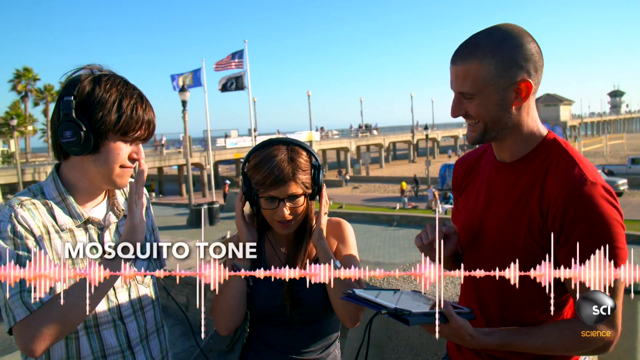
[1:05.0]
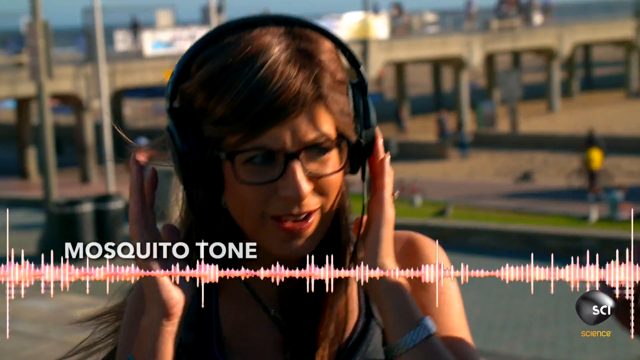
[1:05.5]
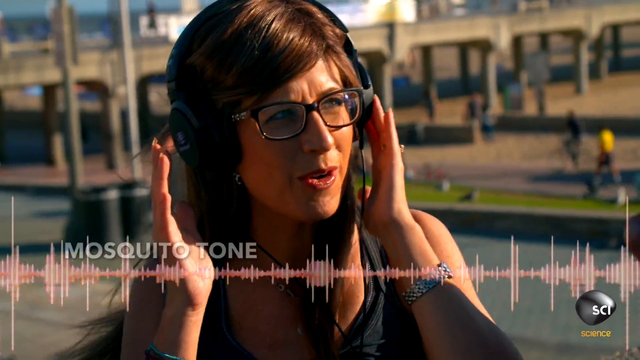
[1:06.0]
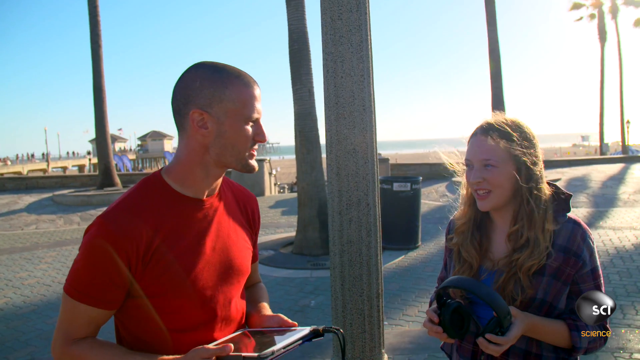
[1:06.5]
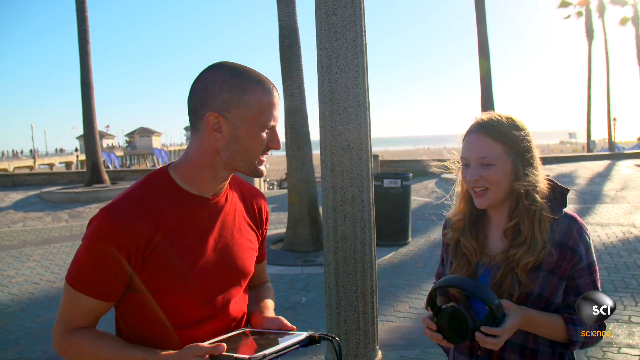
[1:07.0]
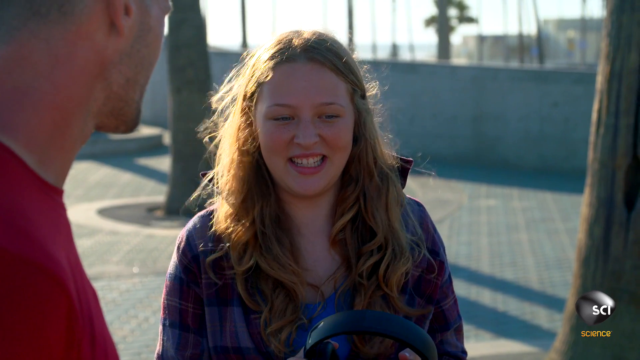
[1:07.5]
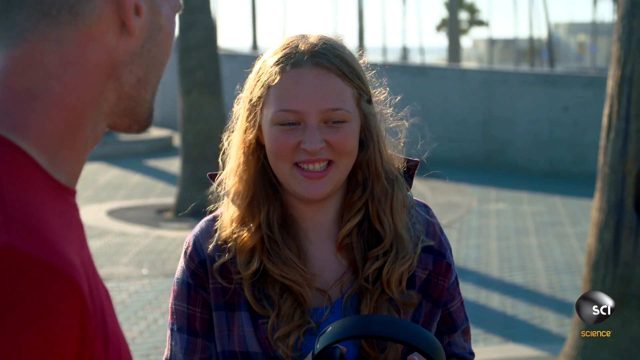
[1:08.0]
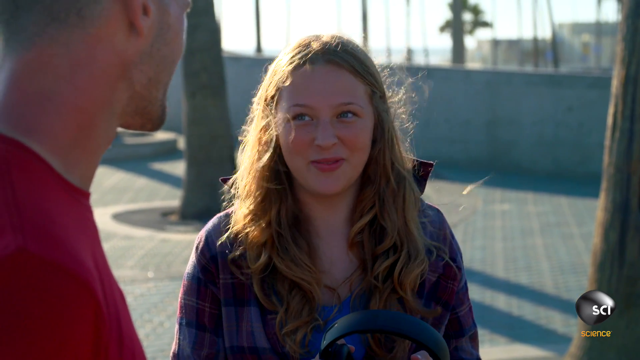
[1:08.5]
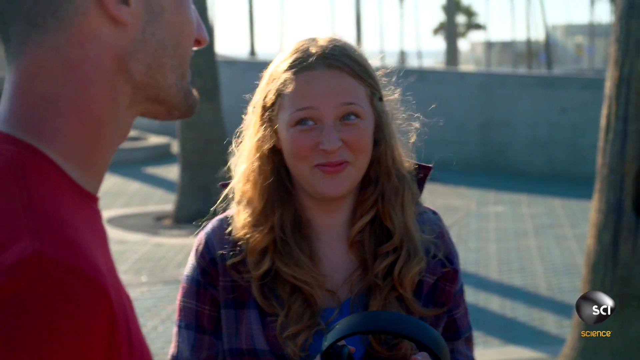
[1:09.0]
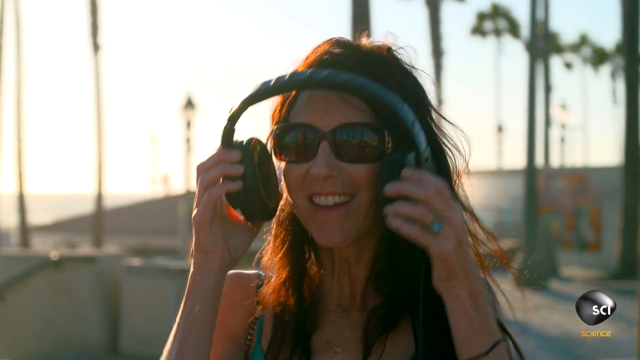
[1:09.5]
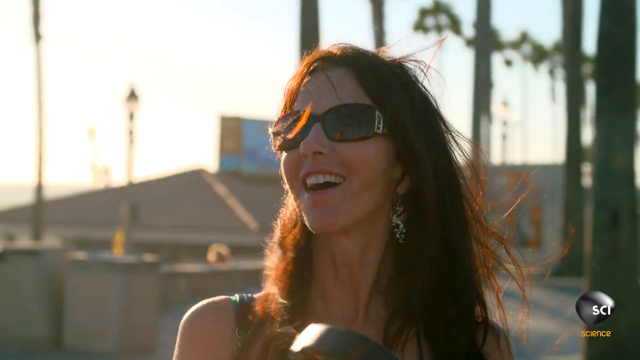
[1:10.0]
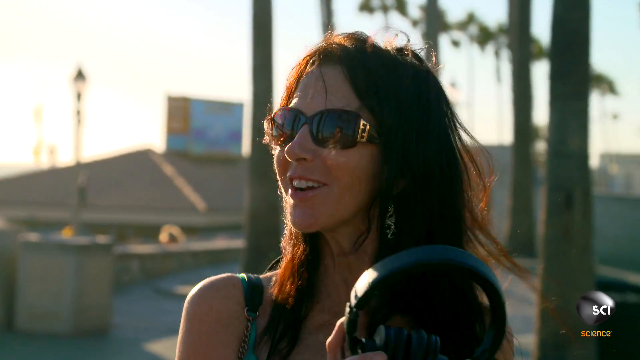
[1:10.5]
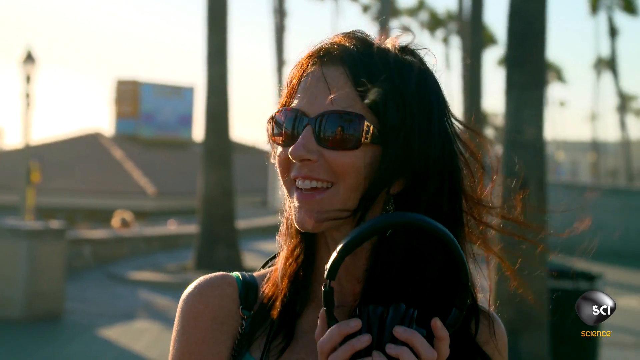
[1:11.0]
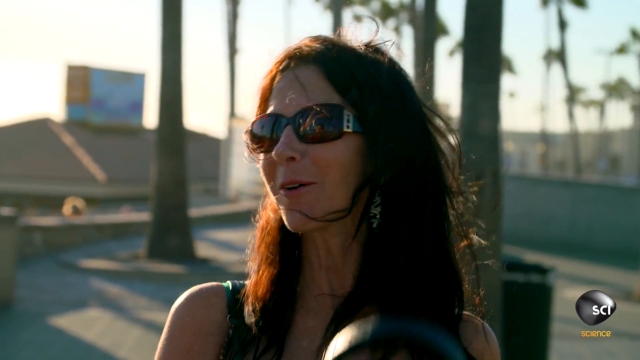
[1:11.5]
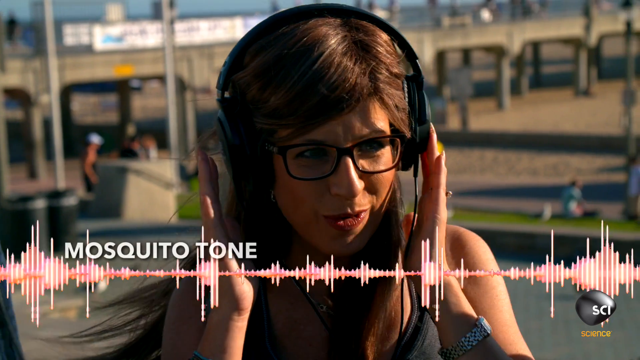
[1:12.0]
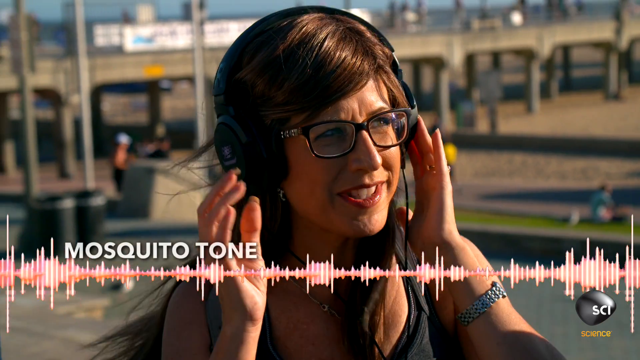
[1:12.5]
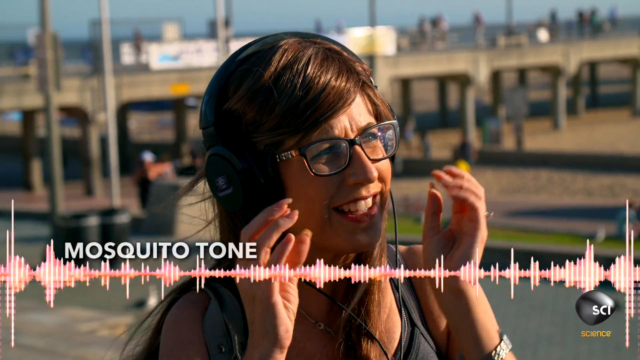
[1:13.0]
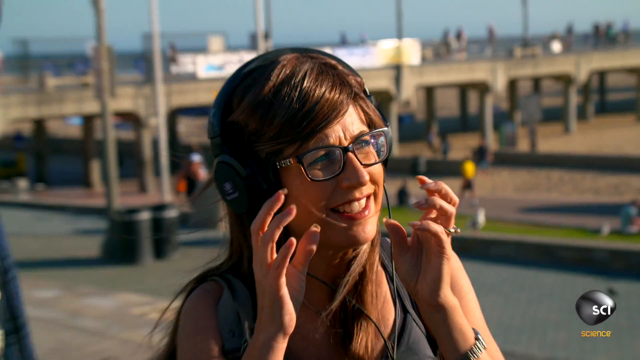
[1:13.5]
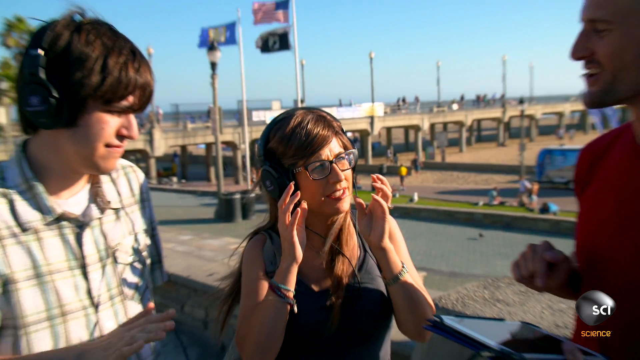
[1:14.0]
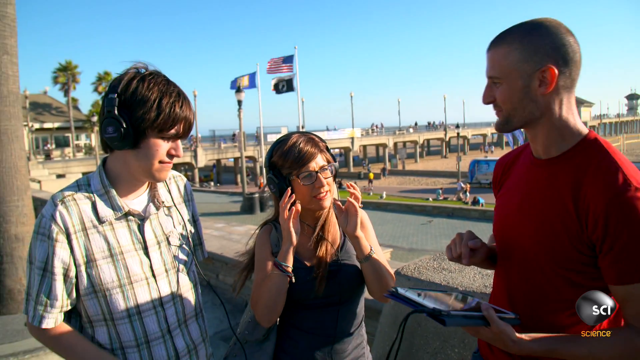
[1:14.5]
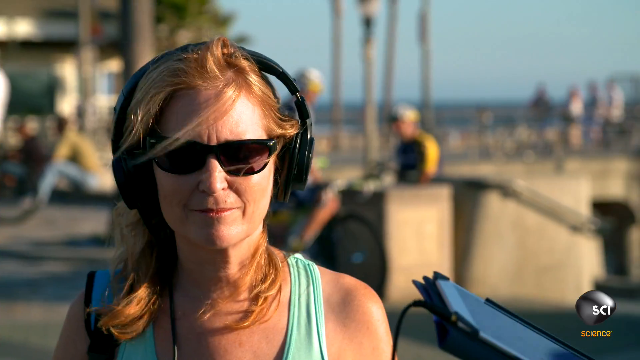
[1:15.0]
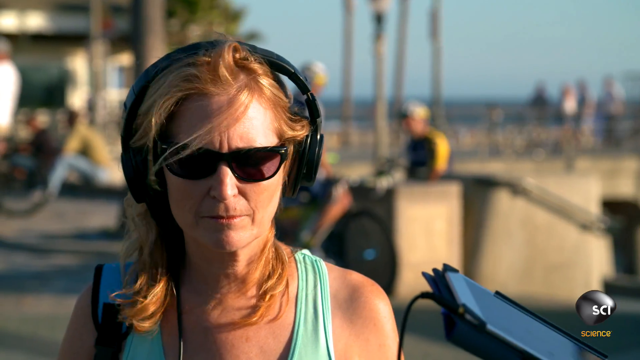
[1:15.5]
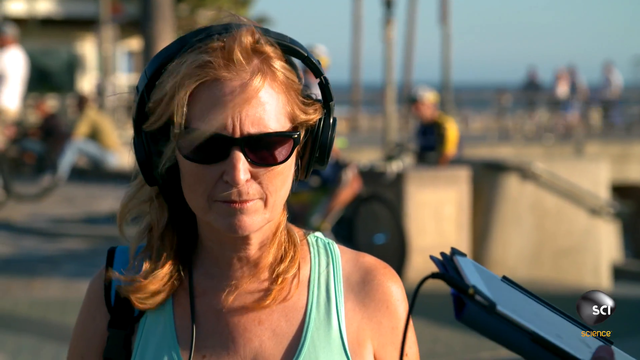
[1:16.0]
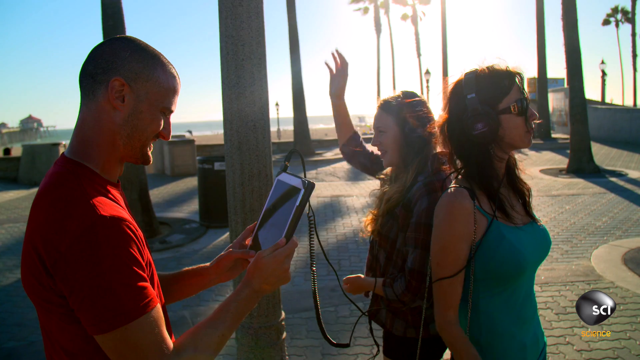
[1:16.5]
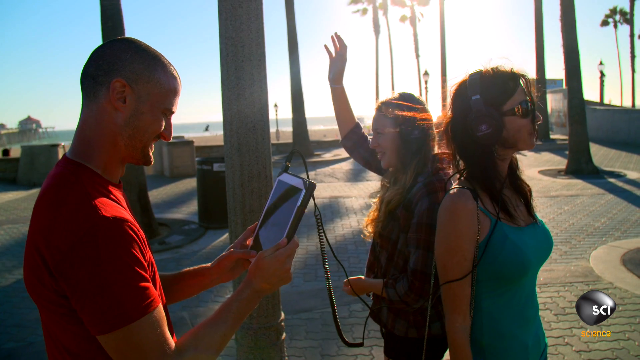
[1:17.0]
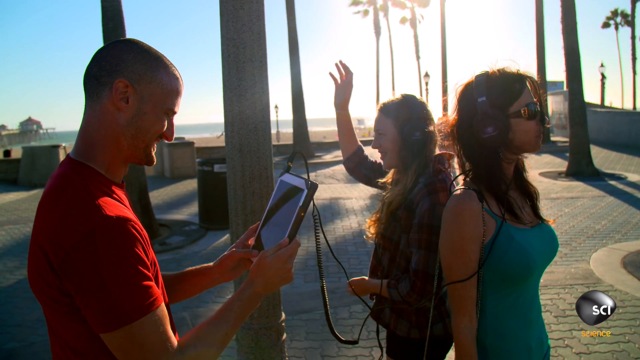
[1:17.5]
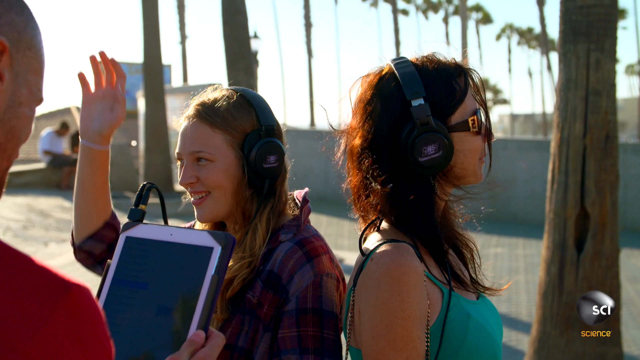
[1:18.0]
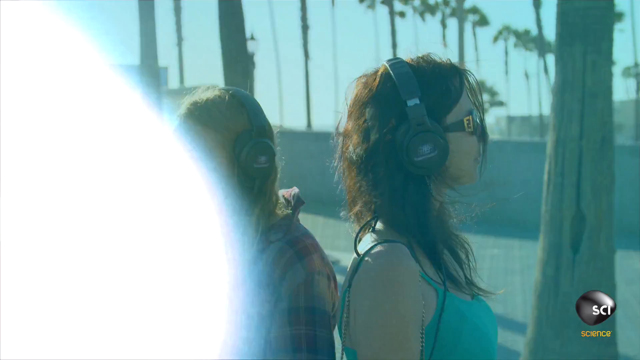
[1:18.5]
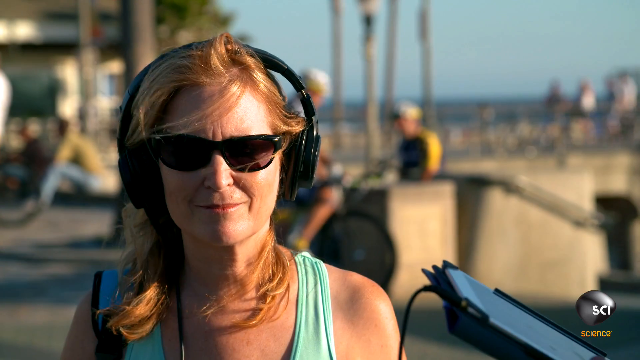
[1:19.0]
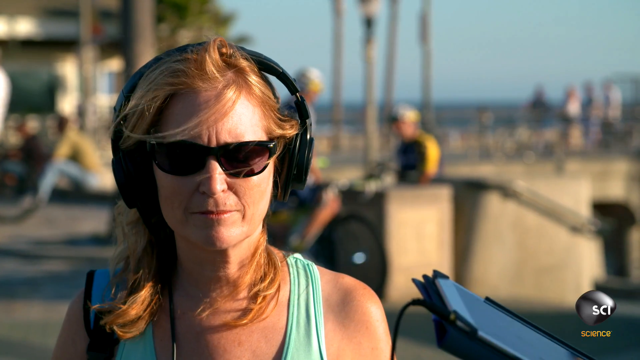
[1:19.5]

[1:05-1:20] The camera zooms in on some of their faces, and then they take the headphones off and start talking, kind of moving their fingers up and down like a tone. Two stand back to back, so they cannot see each other, and one of them raises a hand. A woman with glasses, another woman with sunglasses, and another woman raise their hands. They keep talking to Mike; one woman takes the headphones fully off and looks at Mike, while another tightens them to her ears. The sequence is a compilation of many cuts from different parts of the interview or experiment. The people look engaged and kind of smile, their reactions sort of ranging from hearing an unpleasant sound to amusement. It looks like a windy day; it is very sunny, with the sun behind them sort of setting.